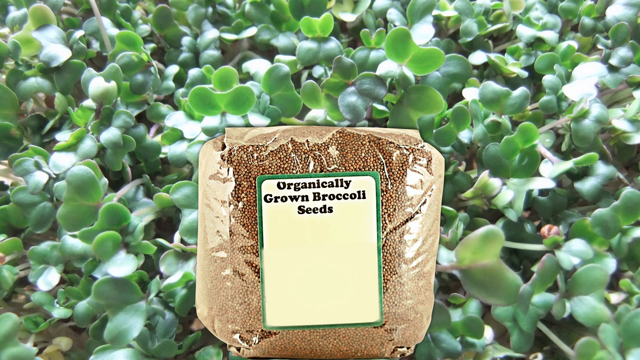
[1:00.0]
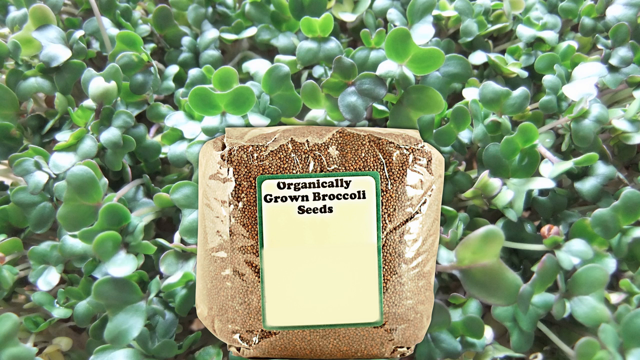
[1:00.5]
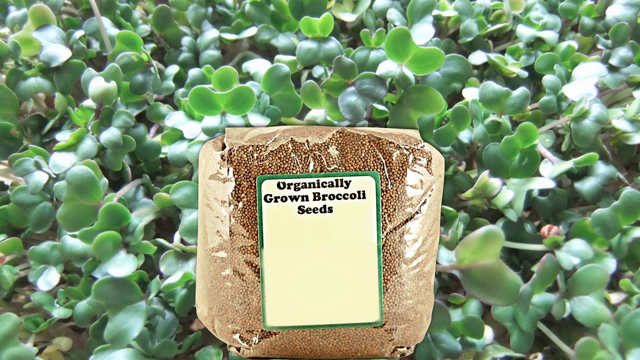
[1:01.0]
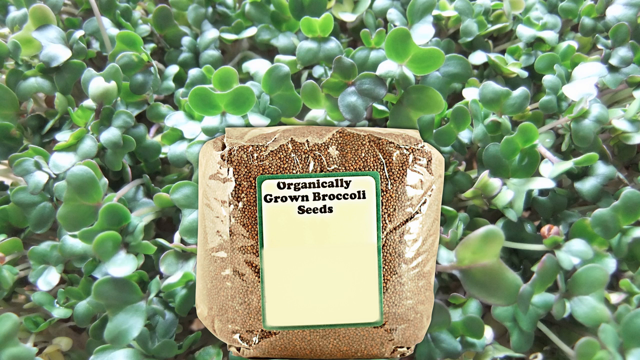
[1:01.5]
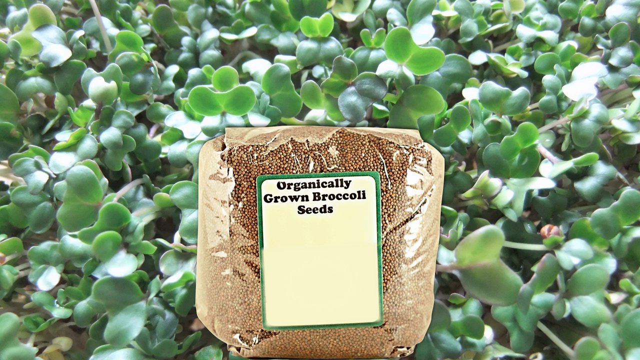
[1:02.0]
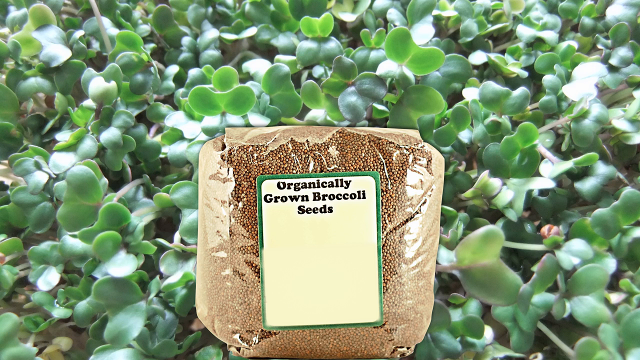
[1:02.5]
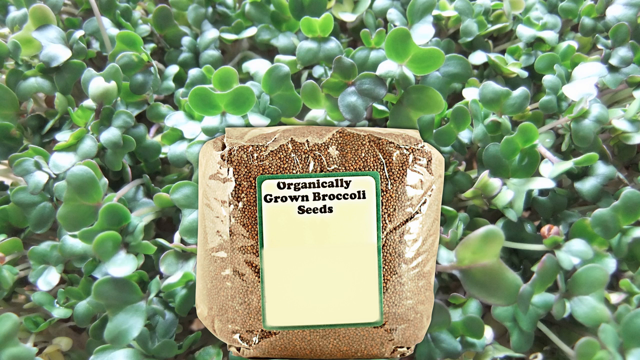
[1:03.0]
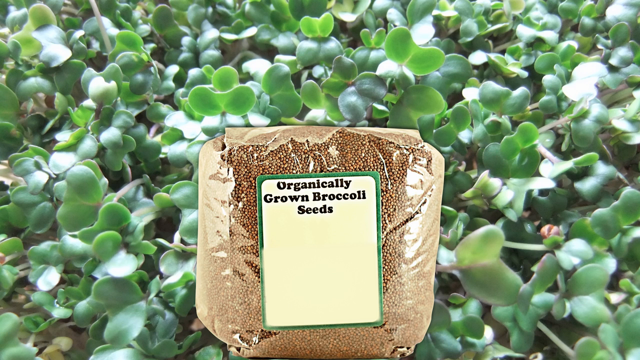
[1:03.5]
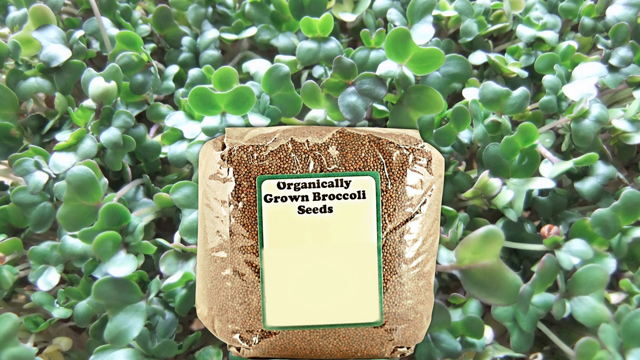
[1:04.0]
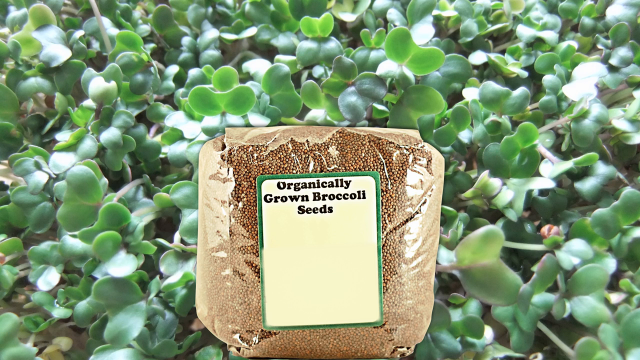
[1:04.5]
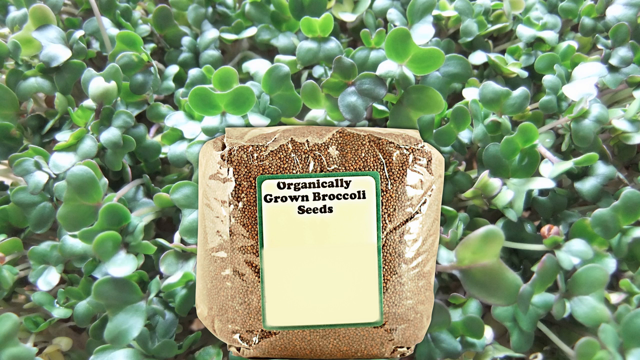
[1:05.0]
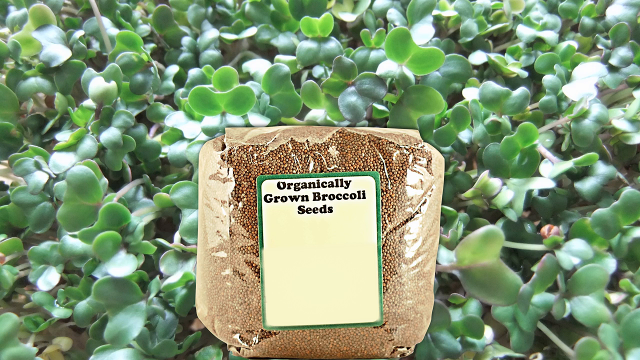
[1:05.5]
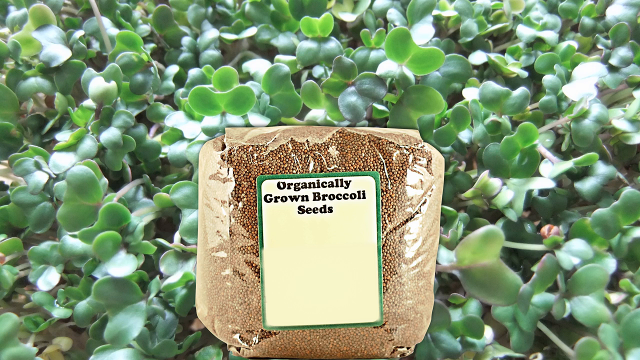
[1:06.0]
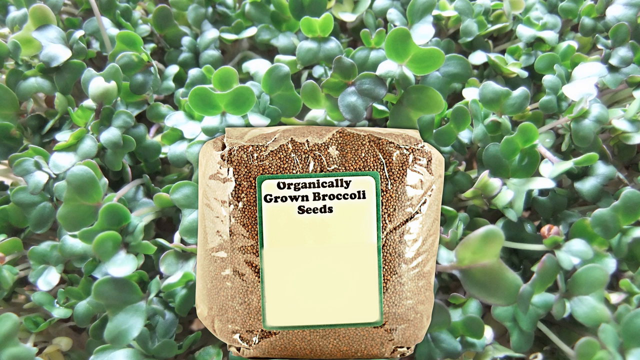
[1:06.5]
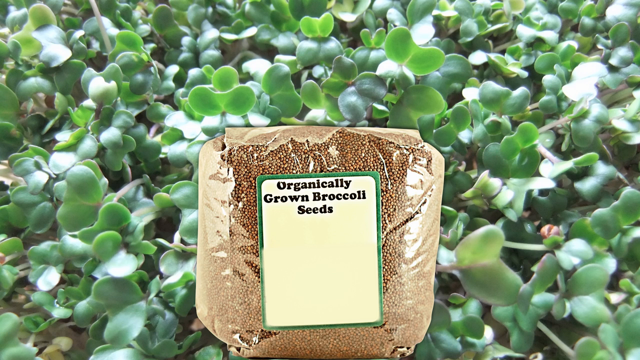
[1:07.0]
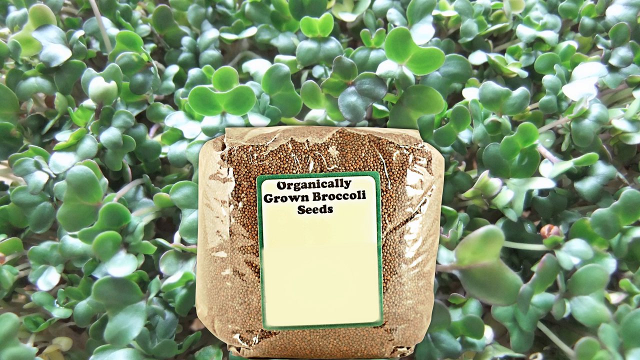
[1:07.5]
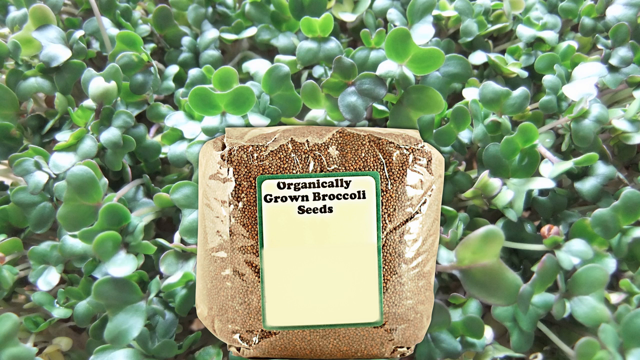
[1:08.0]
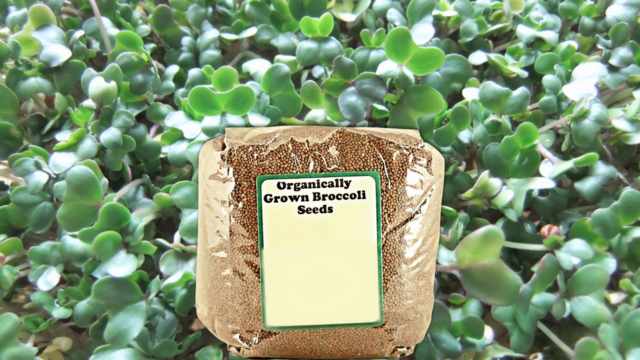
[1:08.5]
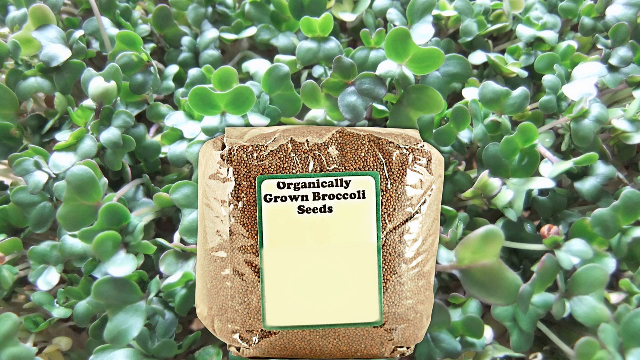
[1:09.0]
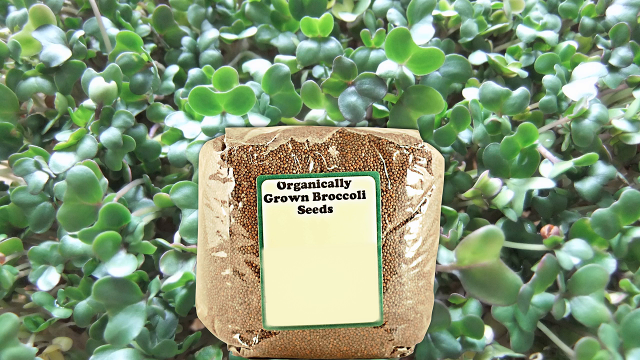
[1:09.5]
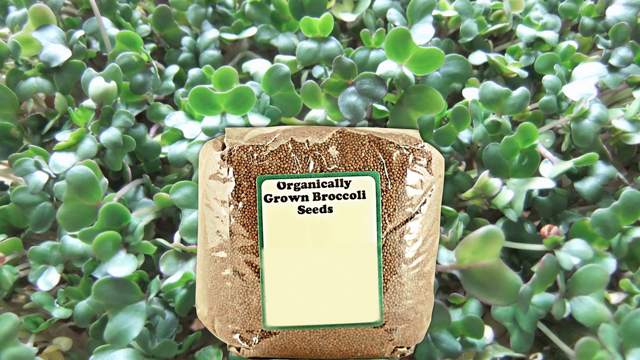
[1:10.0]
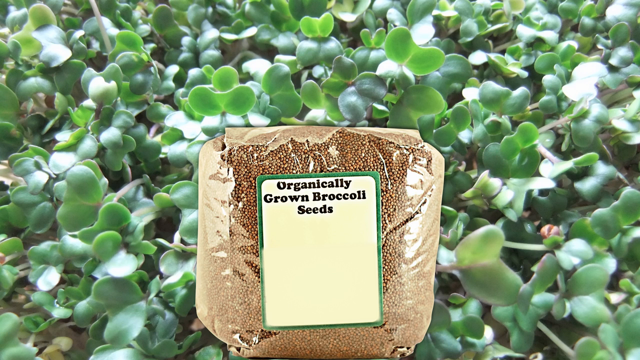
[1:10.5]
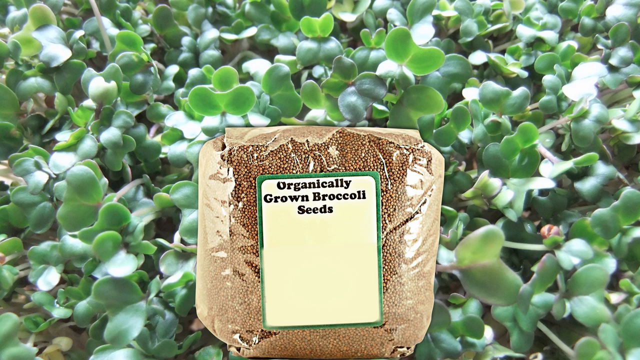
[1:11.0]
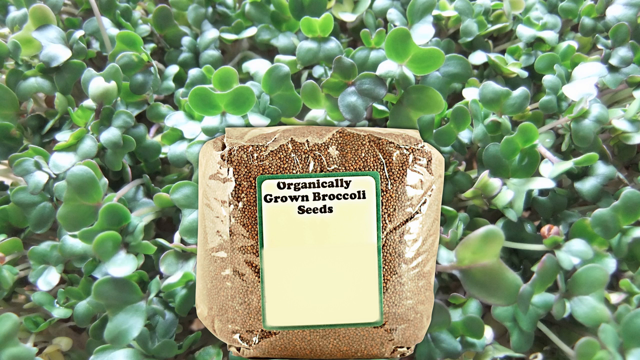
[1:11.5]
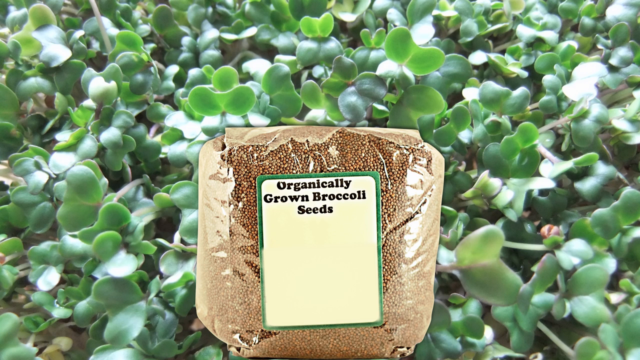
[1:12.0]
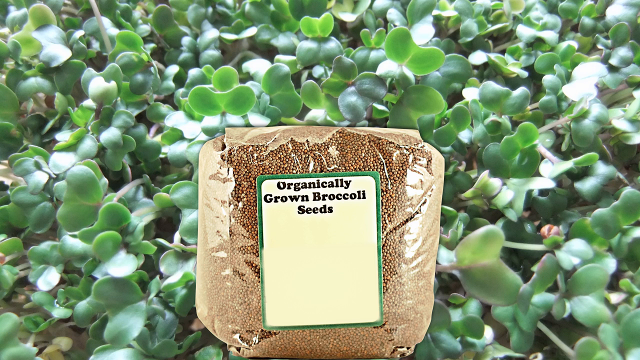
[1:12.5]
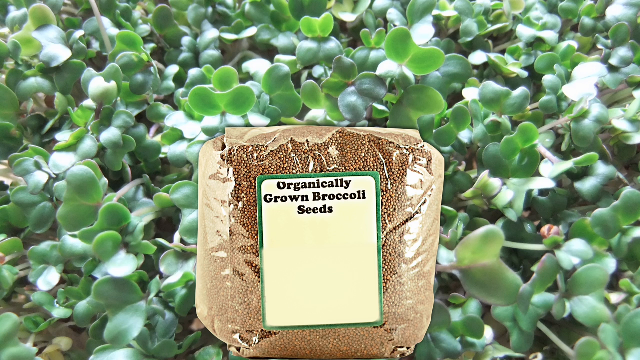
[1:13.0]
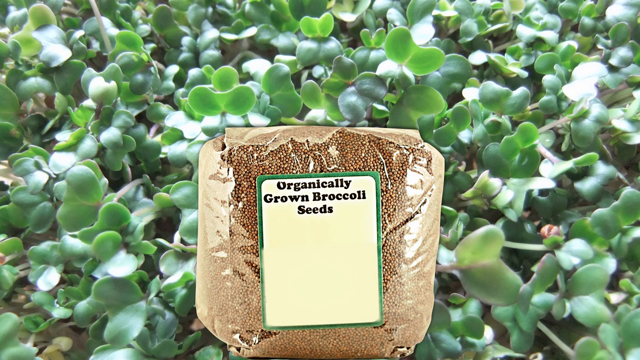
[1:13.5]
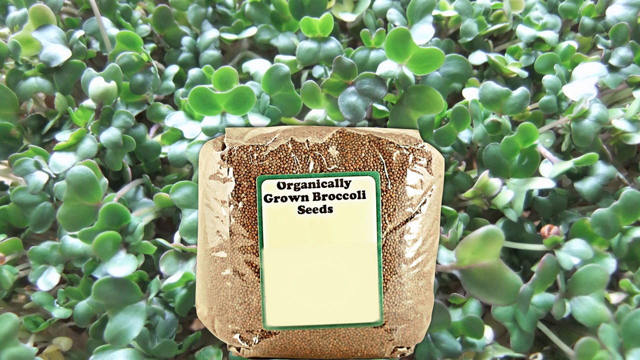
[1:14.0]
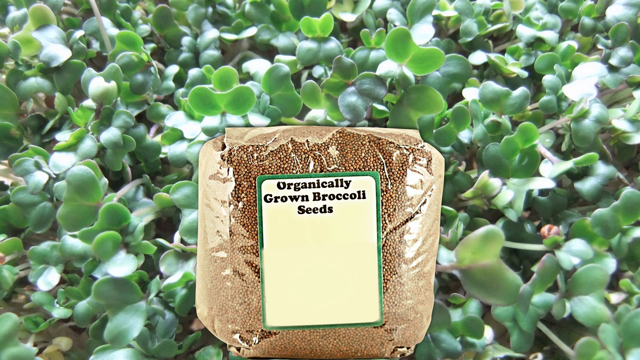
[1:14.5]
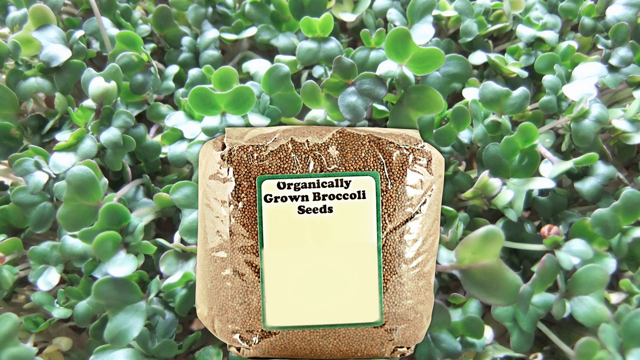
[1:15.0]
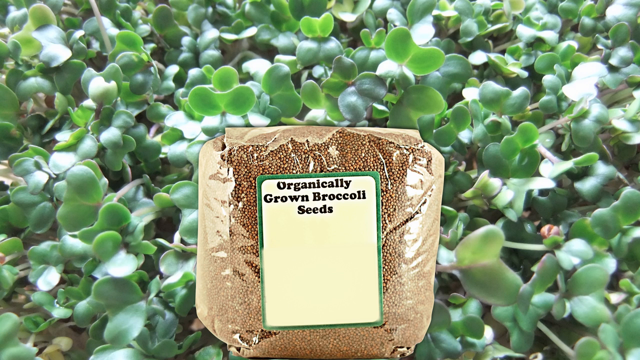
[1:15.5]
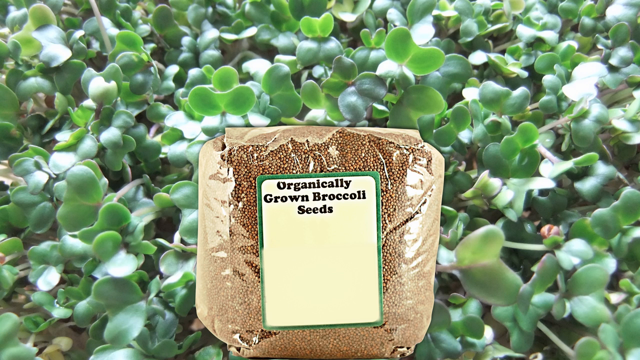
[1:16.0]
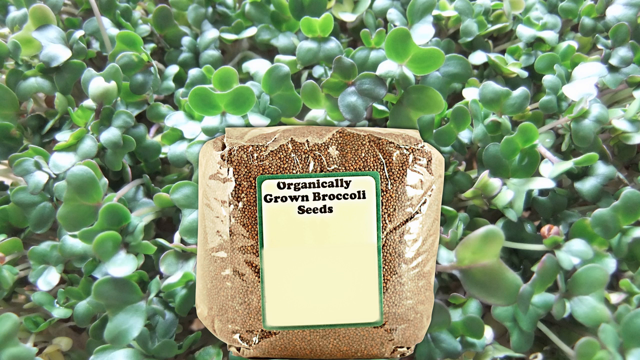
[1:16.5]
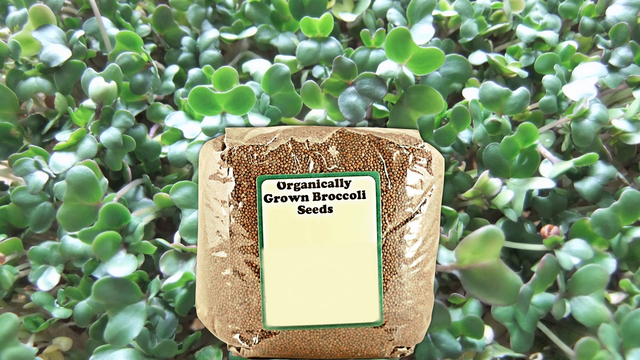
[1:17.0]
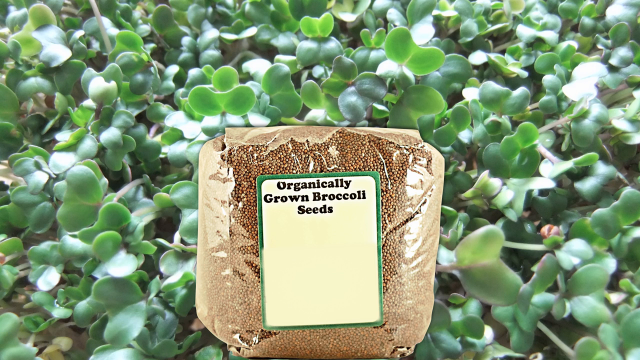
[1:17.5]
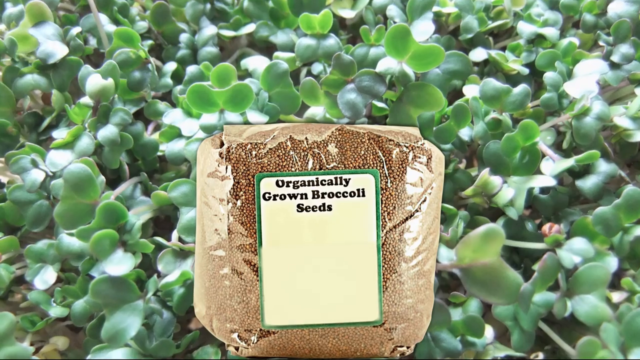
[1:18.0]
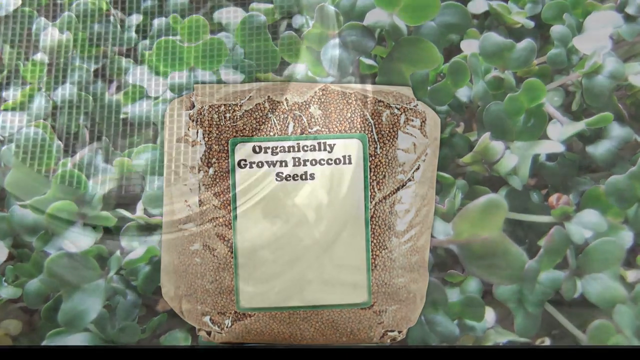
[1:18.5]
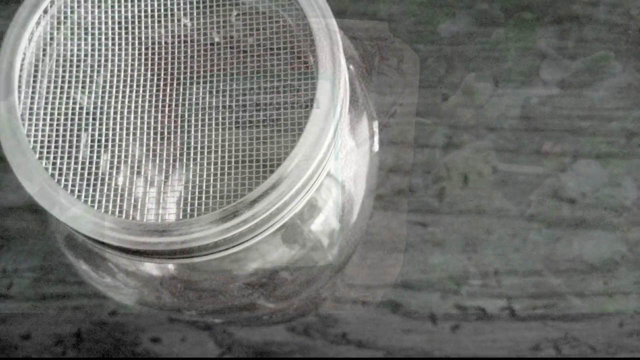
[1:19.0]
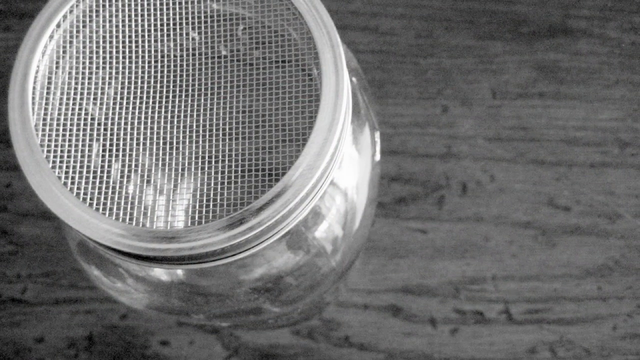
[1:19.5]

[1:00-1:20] A closer look shows the bag of broccoli seeds: the seeds are brown and packed in transparent plastic that is kind of brown on the sides, with a sticker in the middle. The sticker is a rectangle framed in green that reads "organically grown seeds." The background is still green plants, though it is unclear whether they are broccoli. The scene then shifts to a sieve placed on top of a glass container without a lid. The glass container looks like a storage container and sits on a black surface.